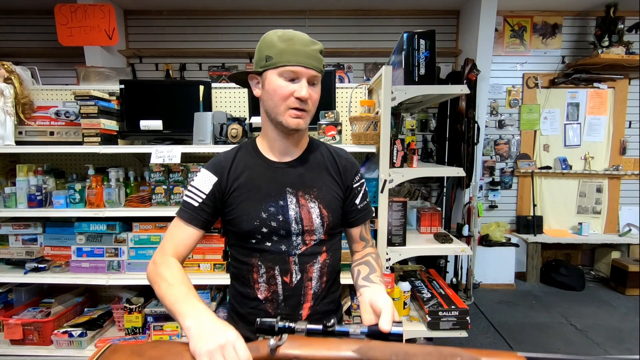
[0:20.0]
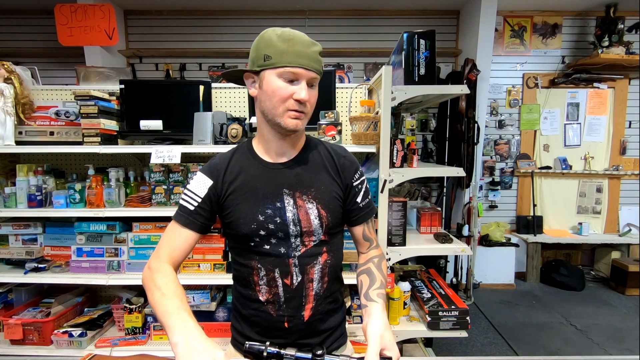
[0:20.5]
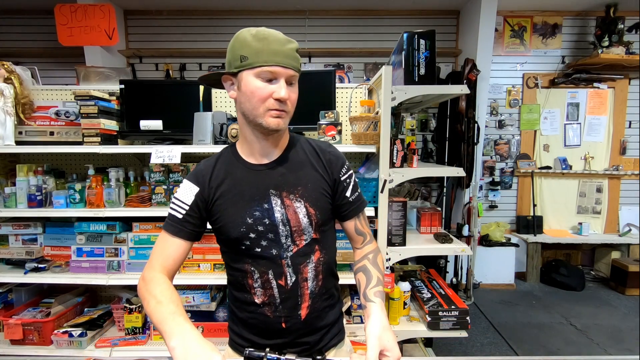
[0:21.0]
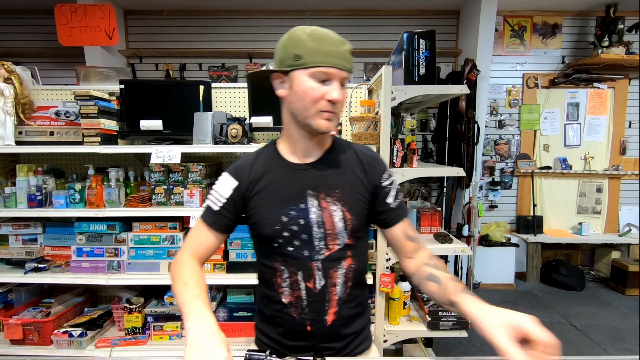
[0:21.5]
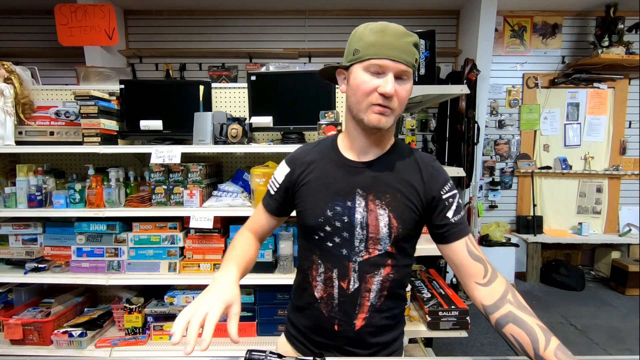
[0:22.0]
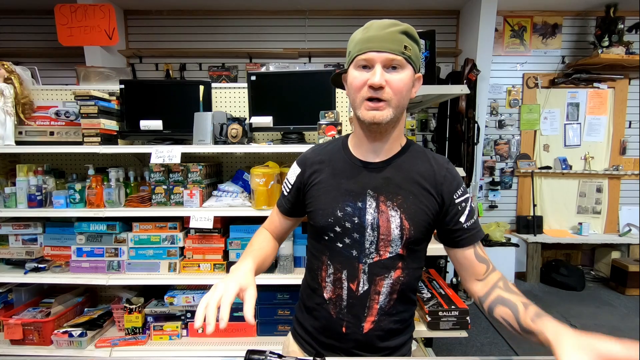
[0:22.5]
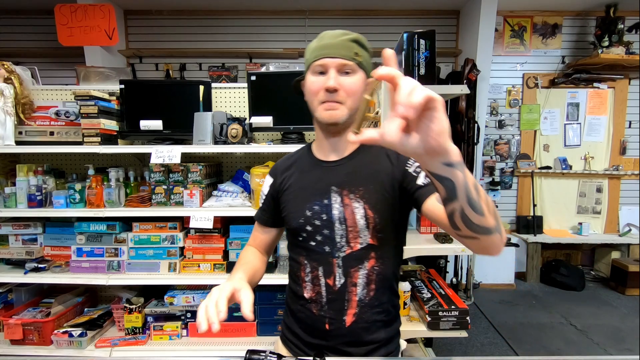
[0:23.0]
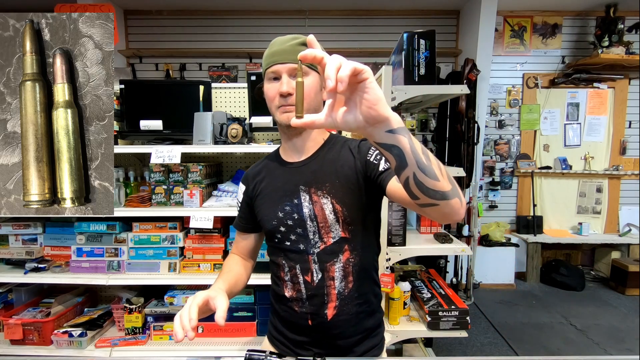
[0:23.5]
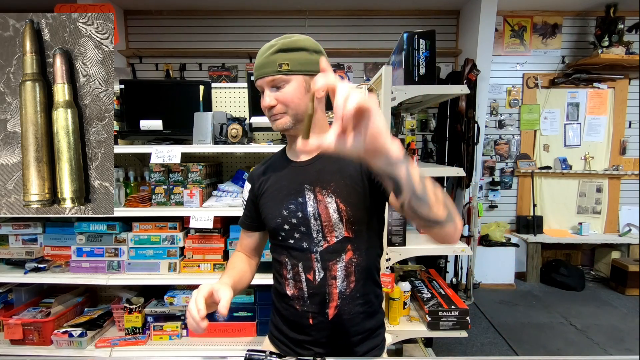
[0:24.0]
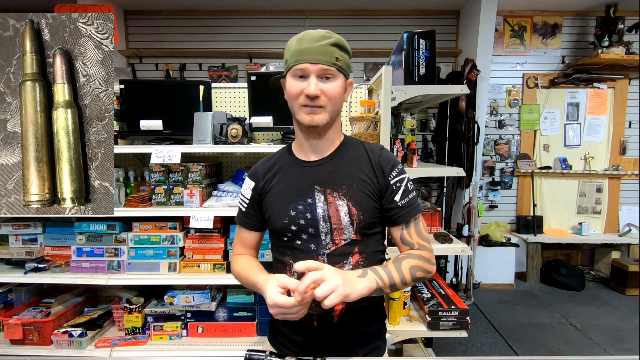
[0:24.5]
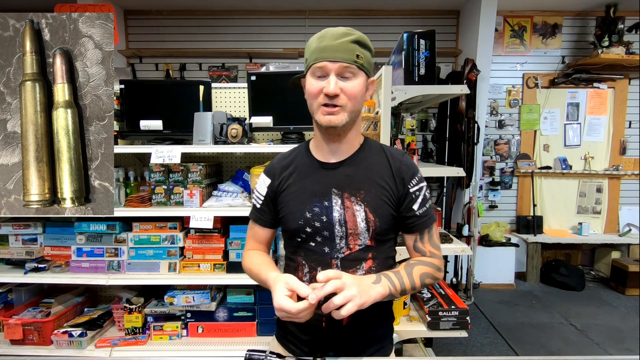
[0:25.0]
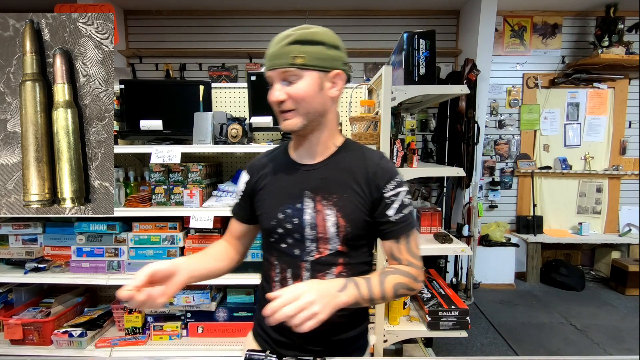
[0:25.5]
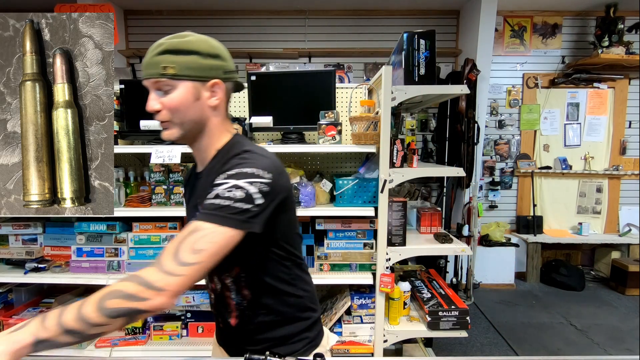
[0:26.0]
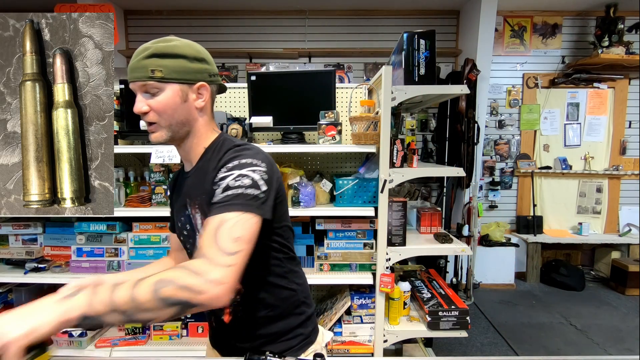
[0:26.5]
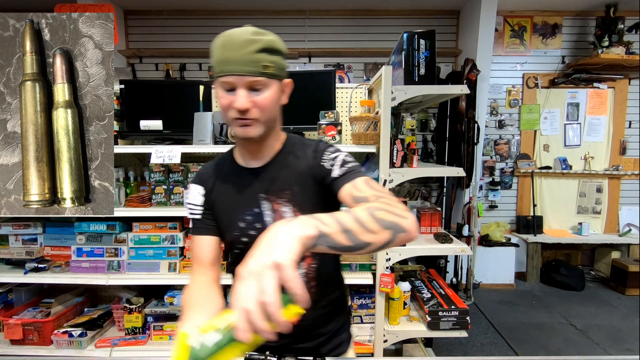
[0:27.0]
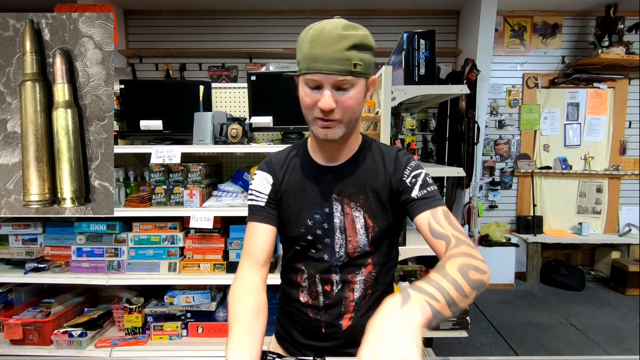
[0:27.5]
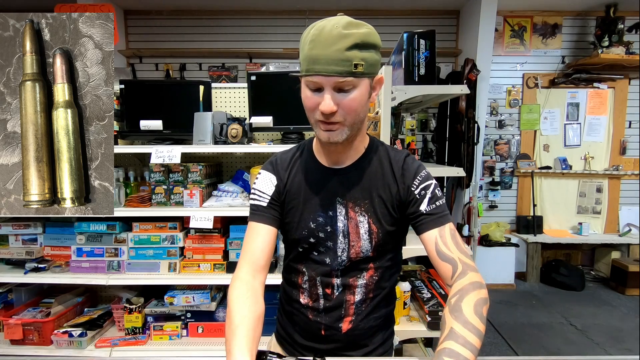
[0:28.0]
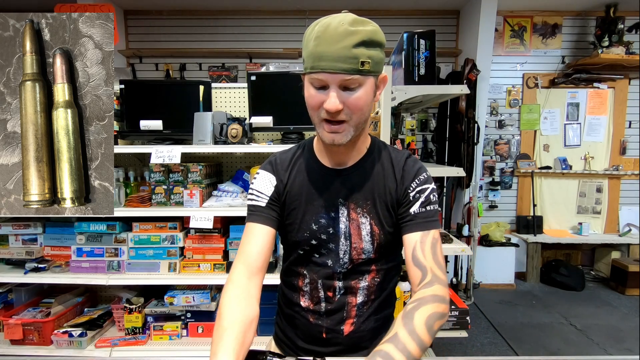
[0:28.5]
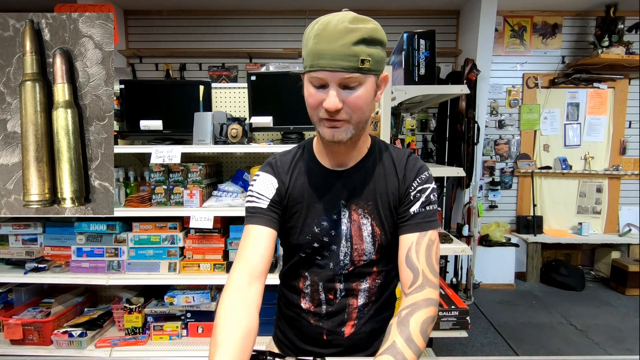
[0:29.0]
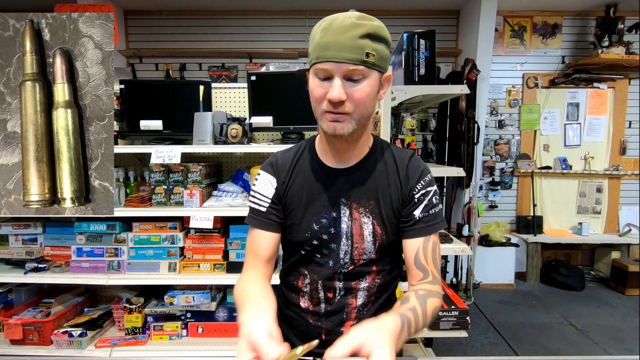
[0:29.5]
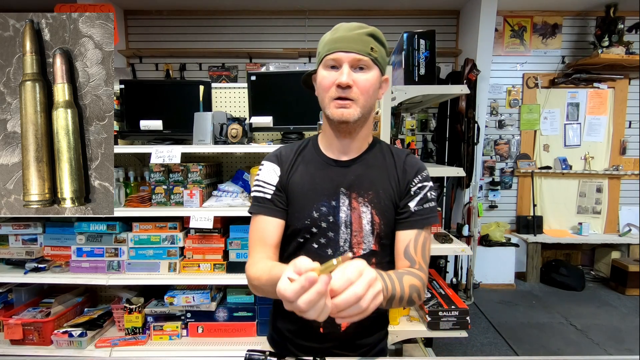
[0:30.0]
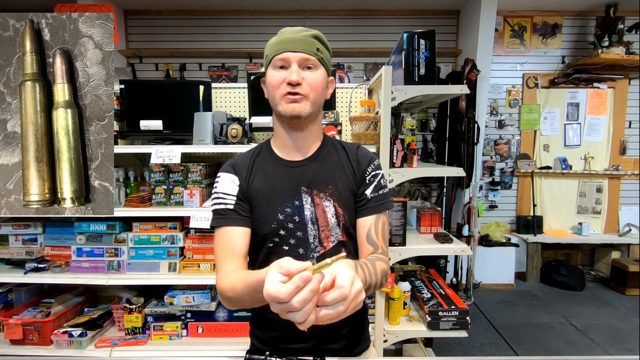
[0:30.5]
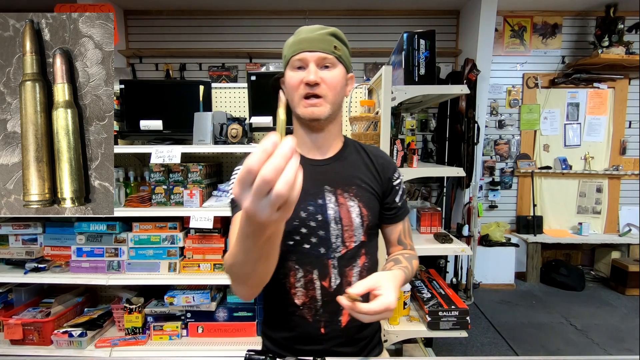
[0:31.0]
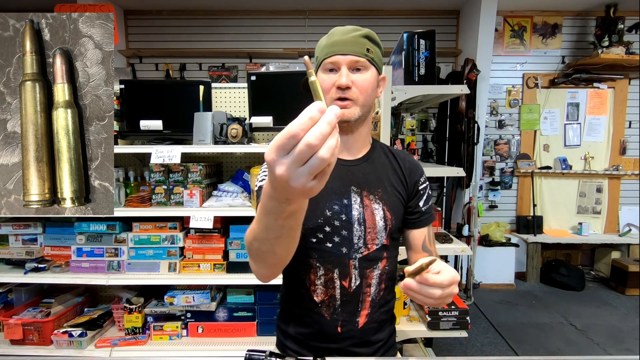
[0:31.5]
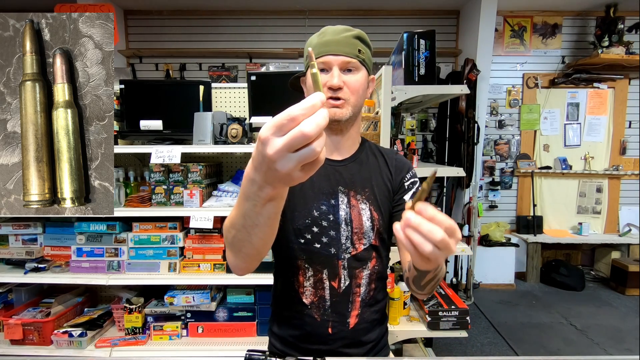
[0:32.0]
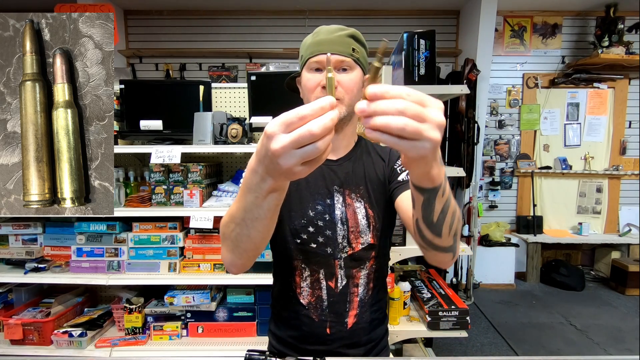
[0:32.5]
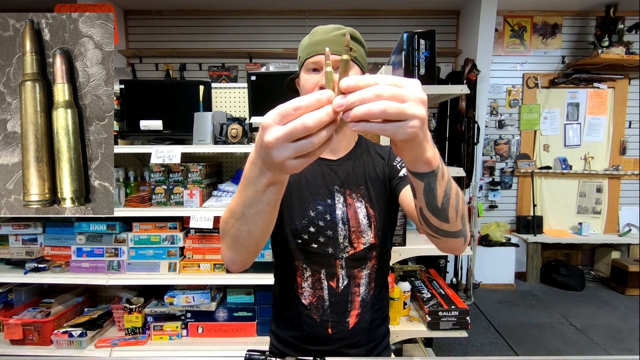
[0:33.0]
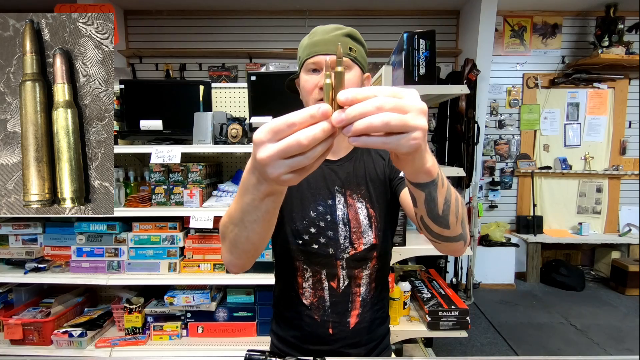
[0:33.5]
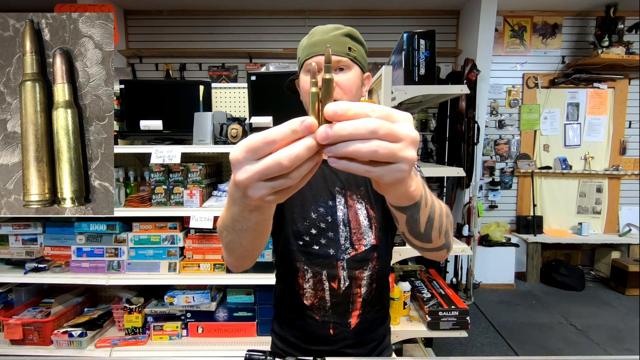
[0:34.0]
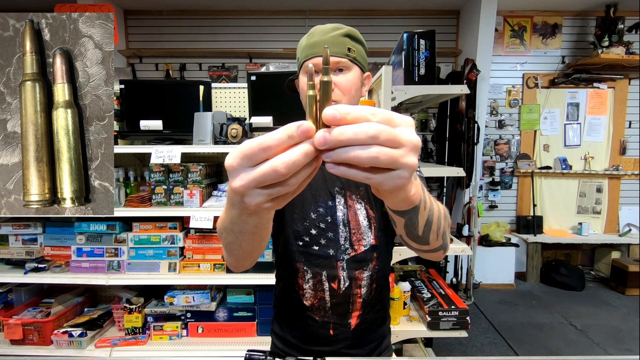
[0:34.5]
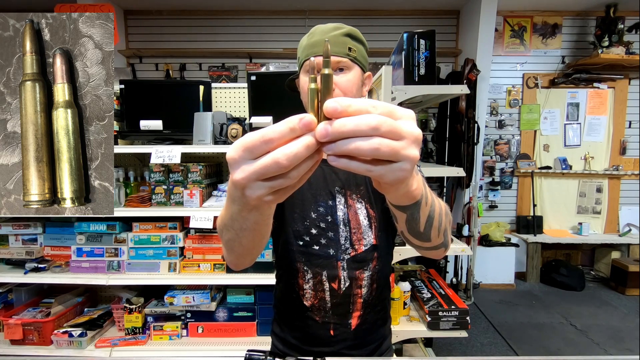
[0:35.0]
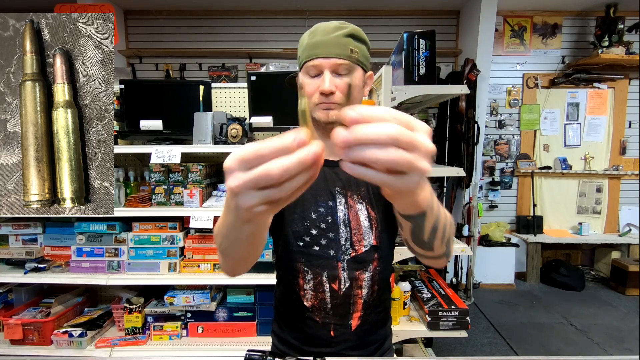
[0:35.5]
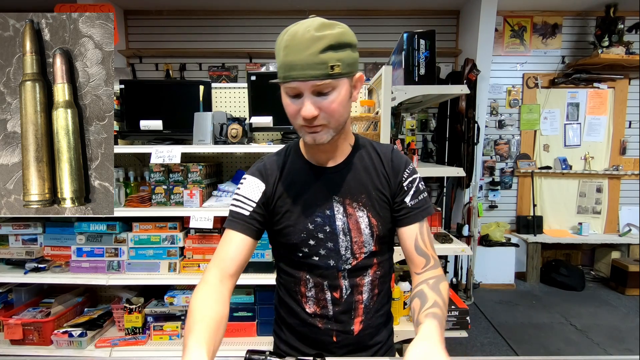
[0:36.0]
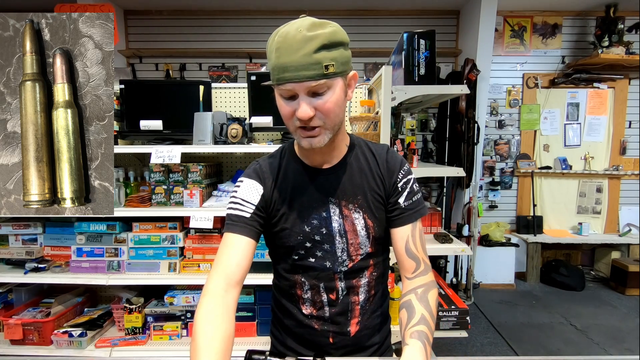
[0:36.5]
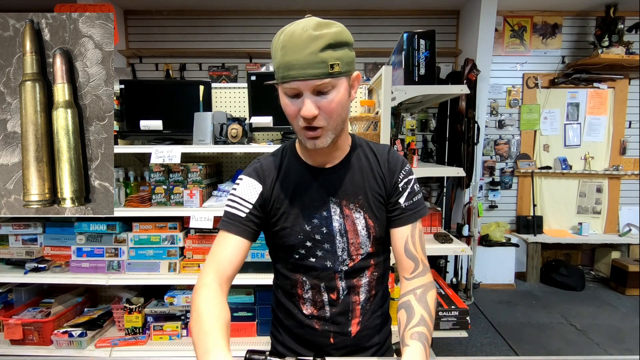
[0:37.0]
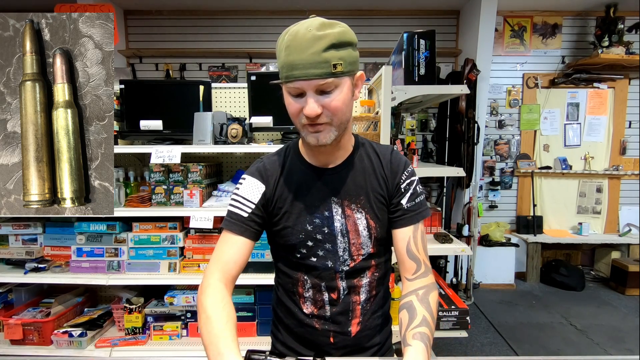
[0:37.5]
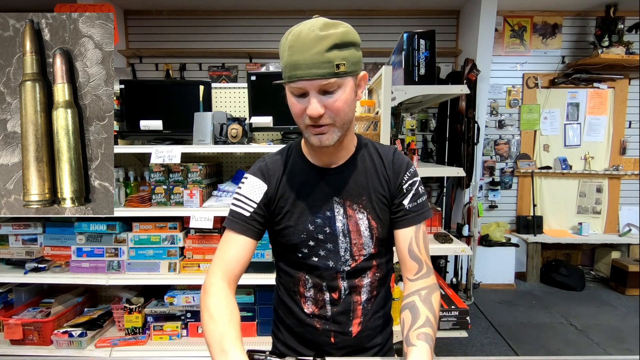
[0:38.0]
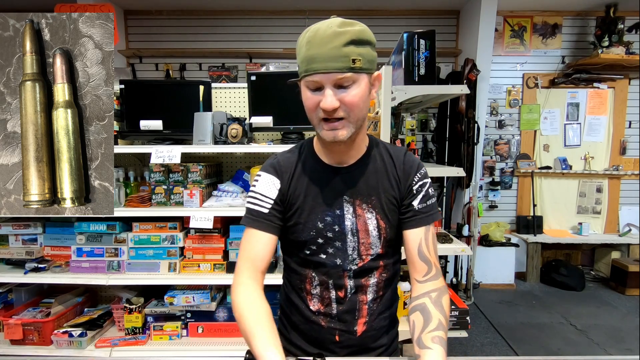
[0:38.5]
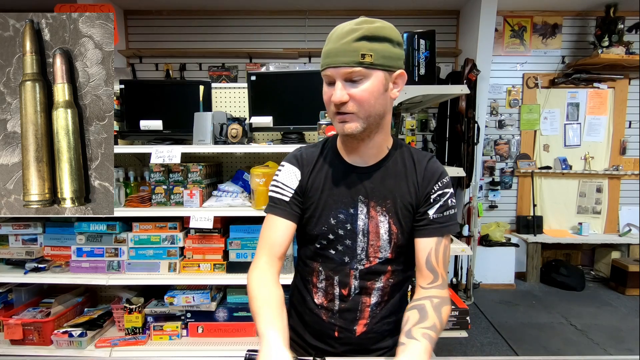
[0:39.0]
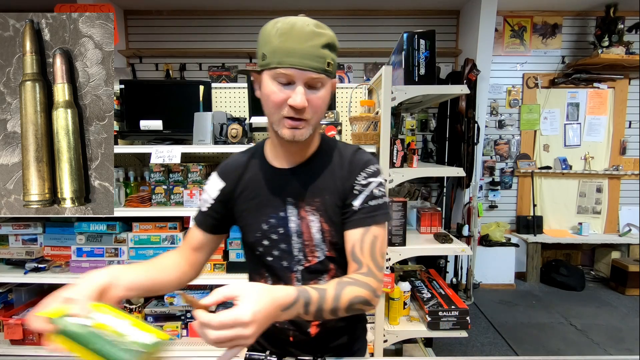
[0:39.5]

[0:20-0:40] A man wearing a green cap and a black t-shirt stands in a store. On the front of his t-shirt is an image of a helmet coloured with the colours of the American flag. The shelves behind him are quite cluttered with items, and three large shelves are visible just to his left. The lowest holds a selection of jigsaw puzzles: one in a turquoise box, a 1000-piece puzzle, and three boxes below it in grey, blue and purple. On the shelf just above is a collection of items including hand wash, and above that are some cassette tapes. The man leans to his right and picks up a small metallic item; a close-up in a small box on the left-hand side shows it is a bullet or a weapon. He puts the bullet down towards his left and picks up another item, then shows the two bullets to the camera so the difference in size between them can be seen.